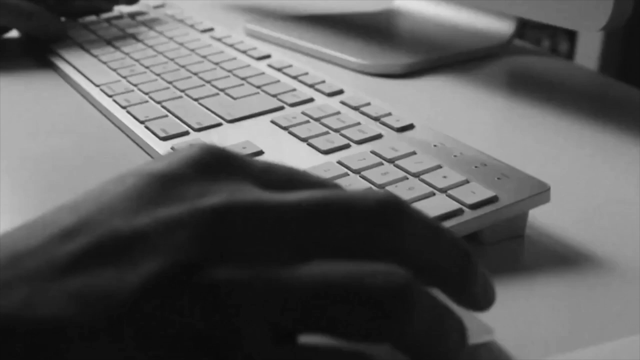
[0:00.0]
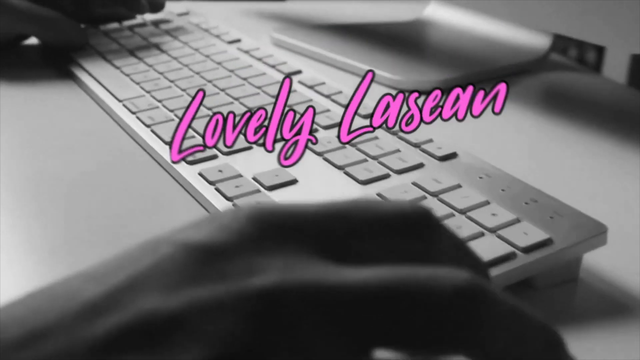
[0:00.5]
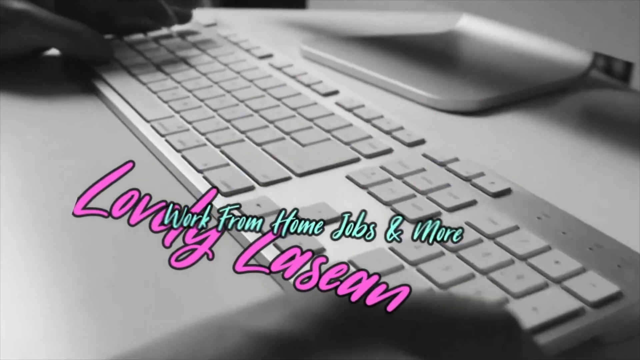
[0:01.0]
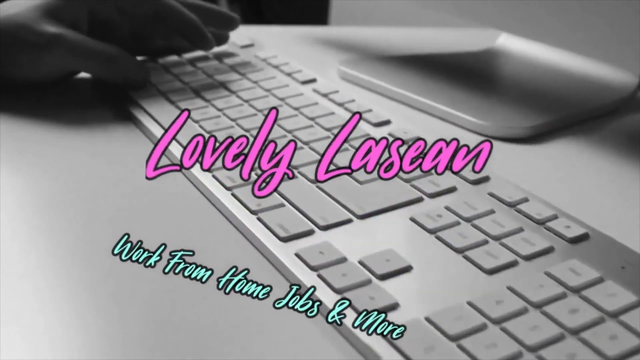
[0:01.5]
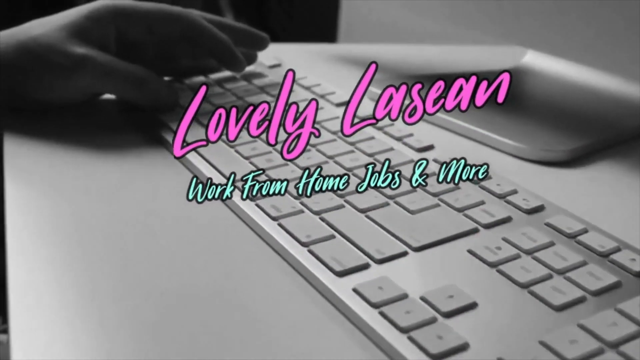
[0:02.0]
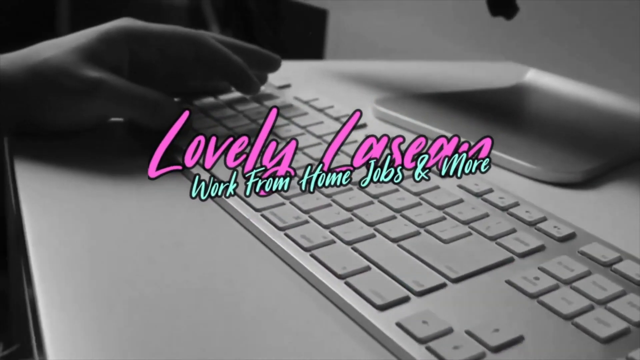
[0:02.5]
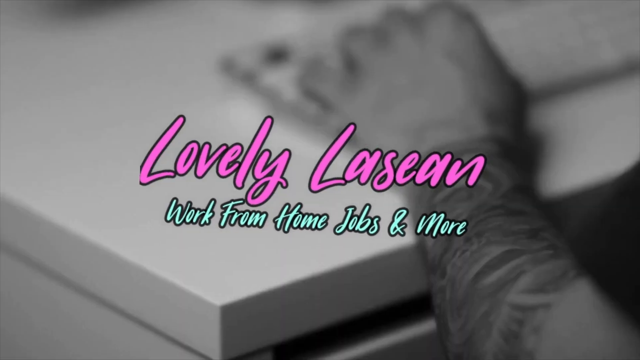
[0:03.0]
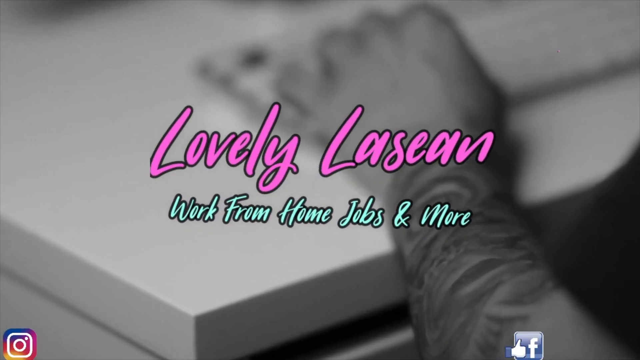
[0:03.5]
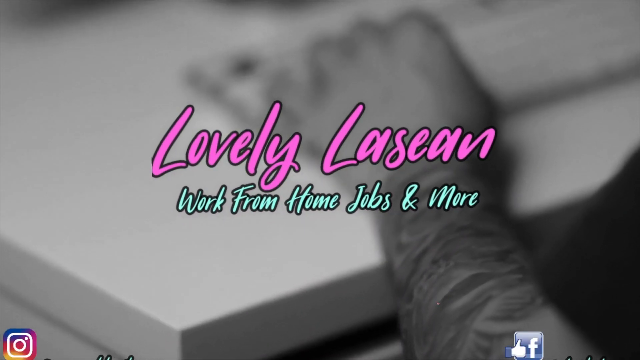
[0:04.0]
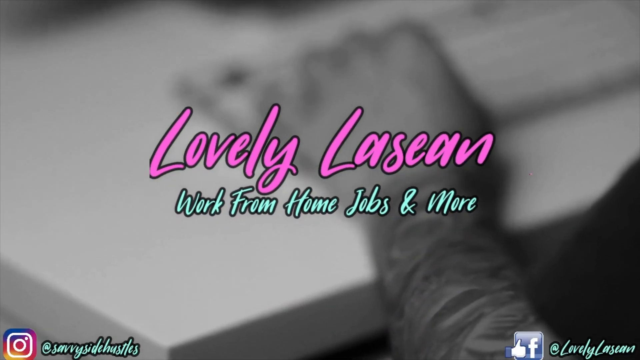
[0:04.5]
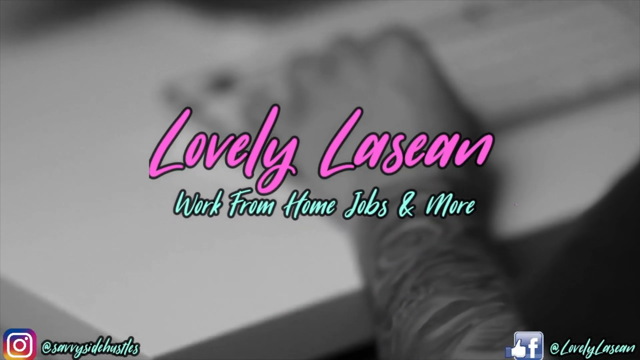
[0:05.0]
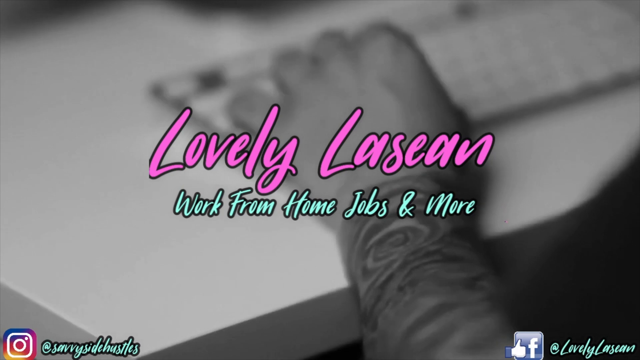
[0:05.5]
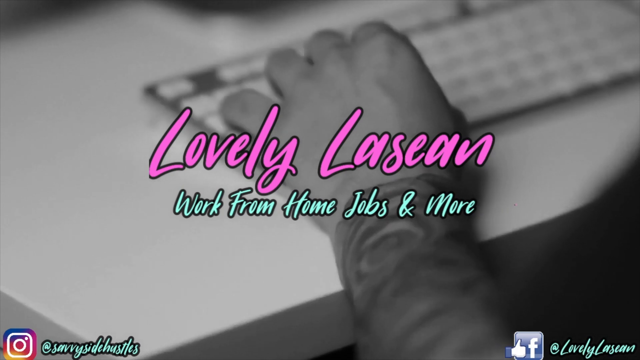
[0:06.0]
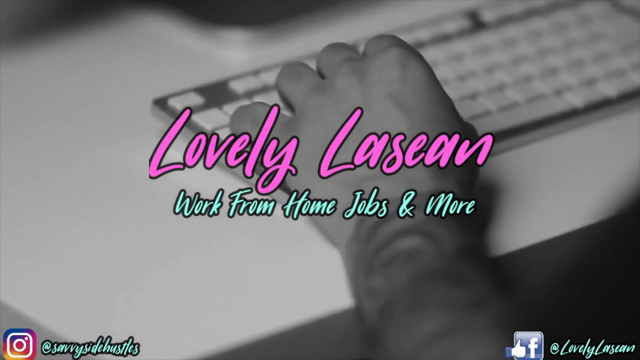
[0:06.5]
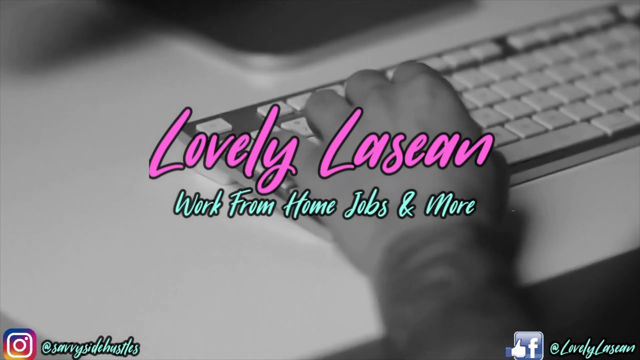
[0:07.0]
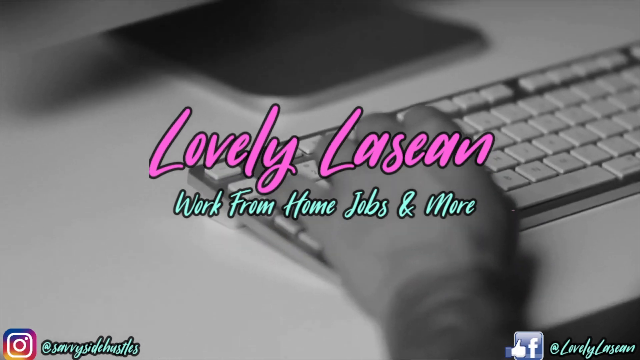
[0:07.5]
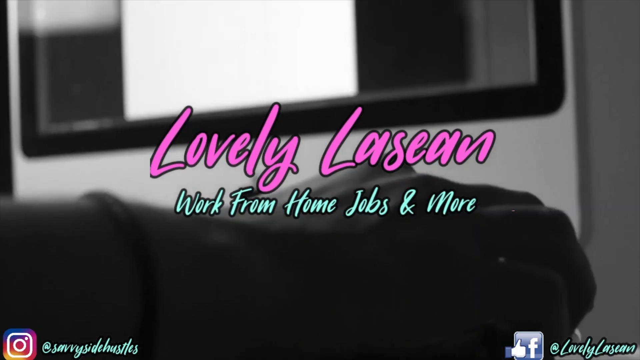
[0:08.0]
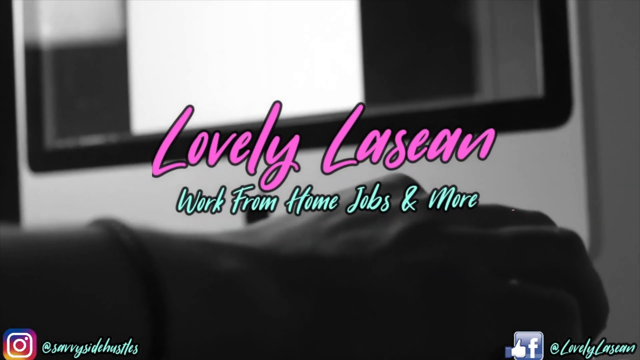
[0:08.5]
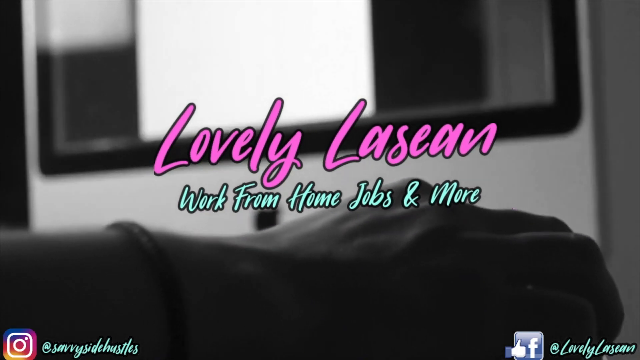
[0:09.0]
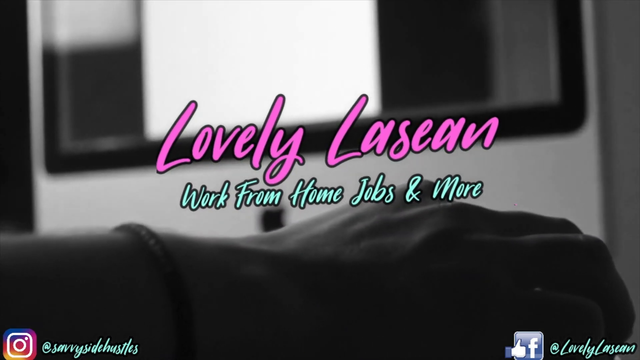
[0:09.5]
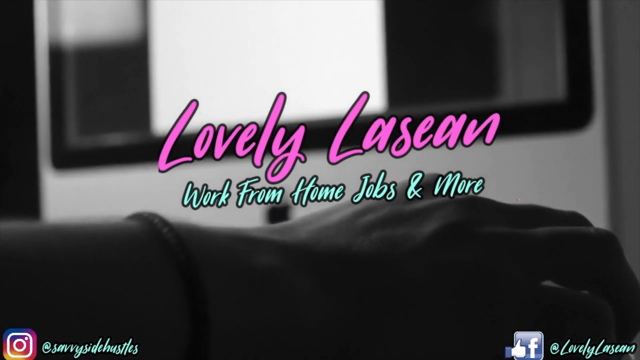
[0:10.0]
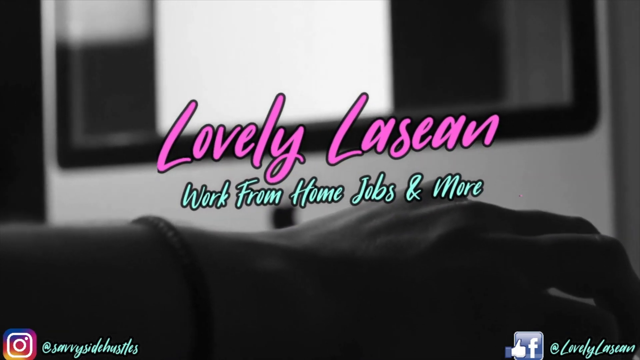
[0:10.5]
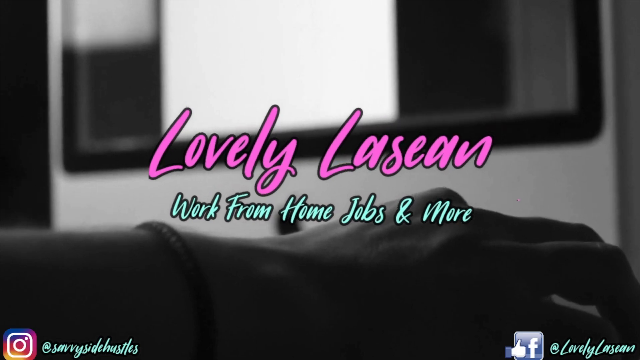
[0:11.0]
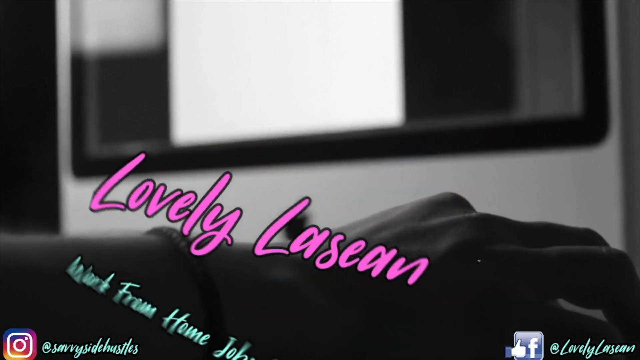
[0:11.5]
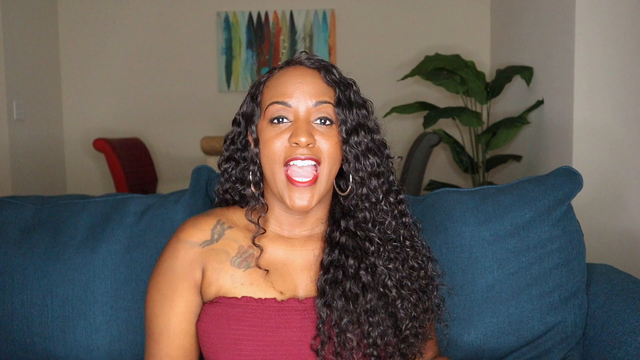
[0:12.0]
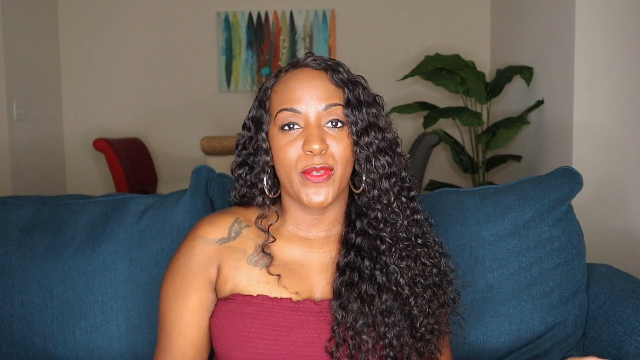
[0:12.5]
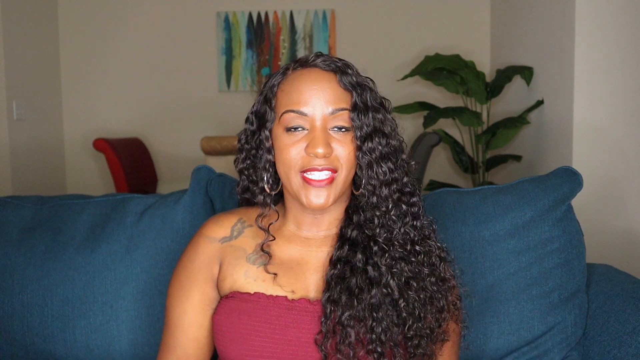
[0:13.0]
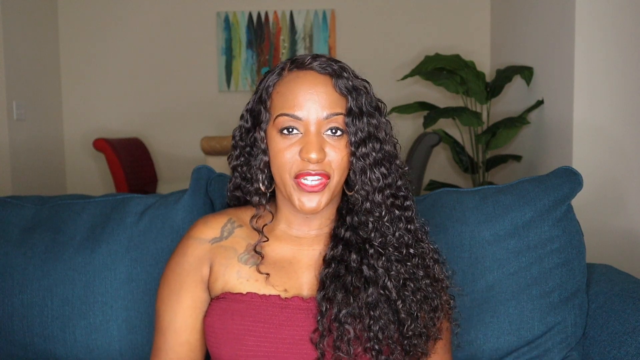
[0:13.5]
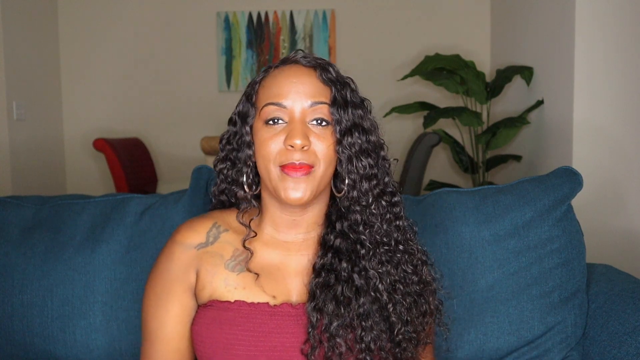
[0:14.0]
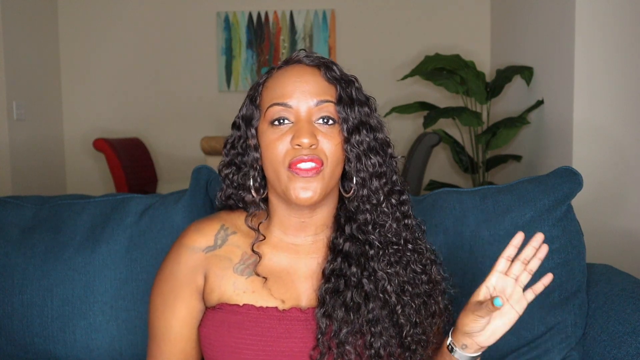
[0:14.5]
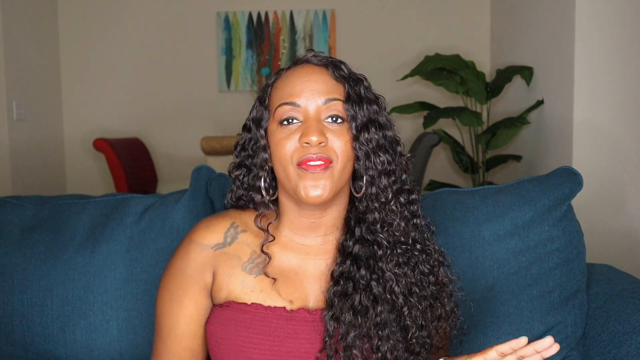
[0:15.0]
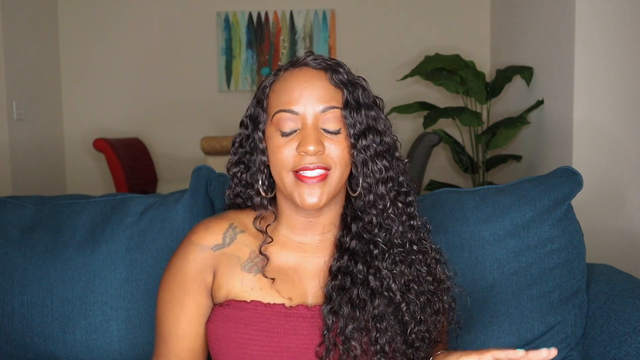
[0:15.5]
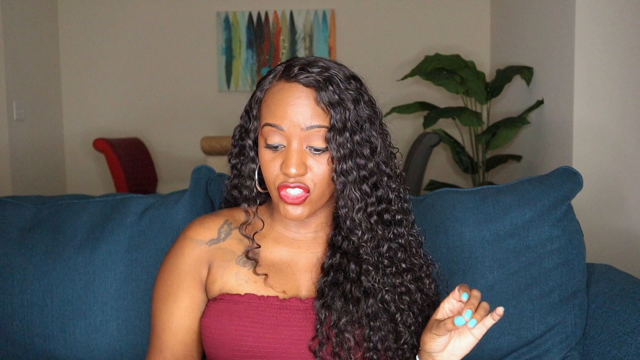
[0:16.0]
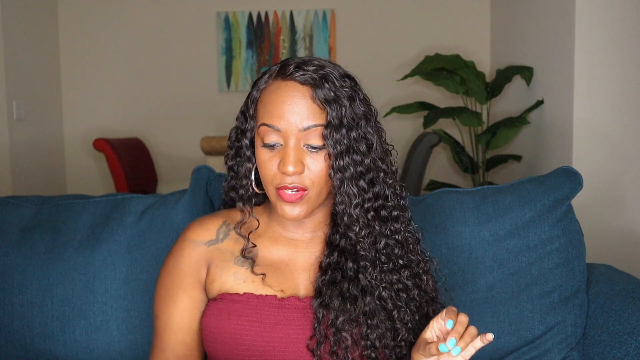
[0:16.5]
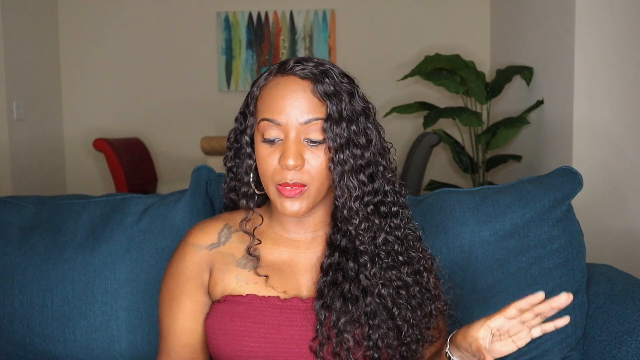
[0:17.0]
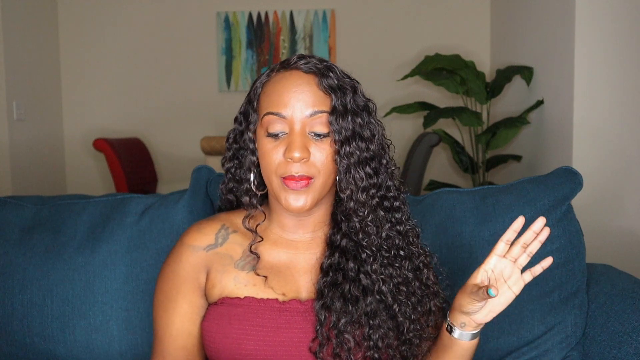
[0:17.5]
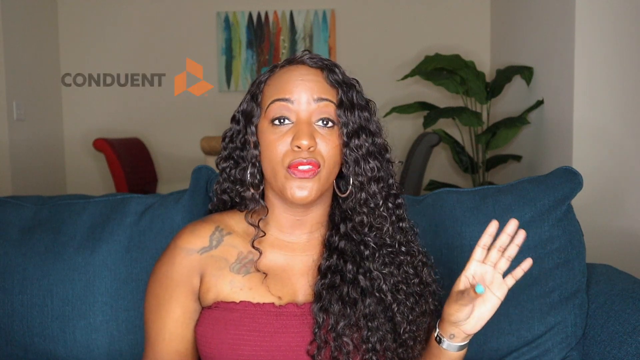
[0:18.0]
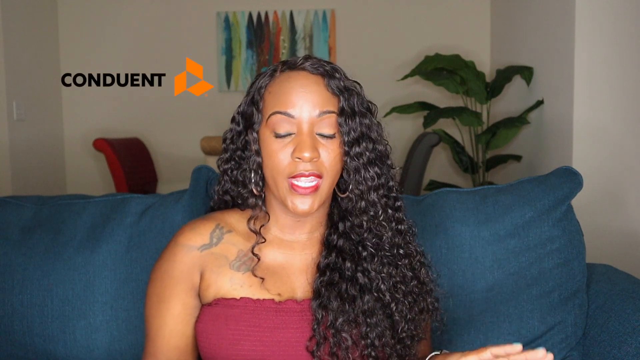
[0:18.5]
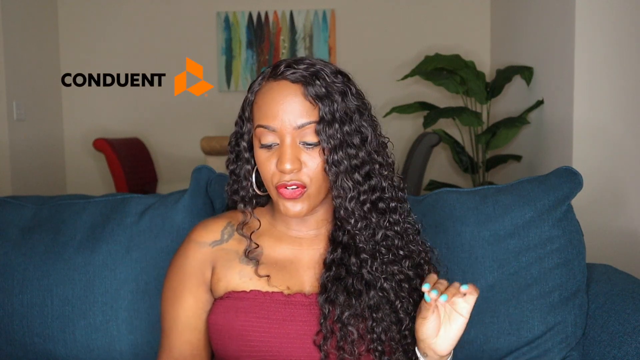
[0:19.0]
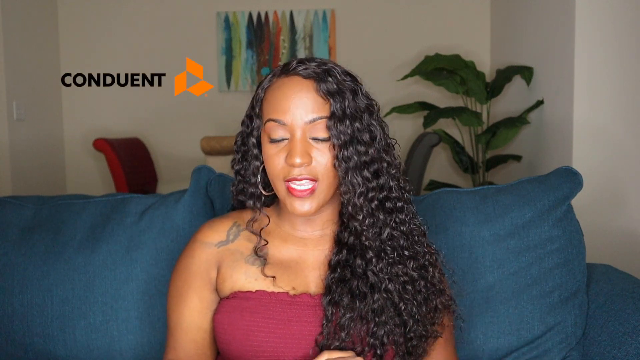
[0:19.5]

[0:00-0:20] Someone types on an Apple desktop computer. On the very first page, a description reads "love relation, work from home jobs." Soon after, a lady appears, sitting comfortably on a sofa. She wears a maroon dress and has a nice weave, and she is talking. The setting is at home, as shown by the tables and chairs behind her and the way she is seated. A big word appears at the top. Facebook and Instagram icons or links are attached at the bottom of the screen.